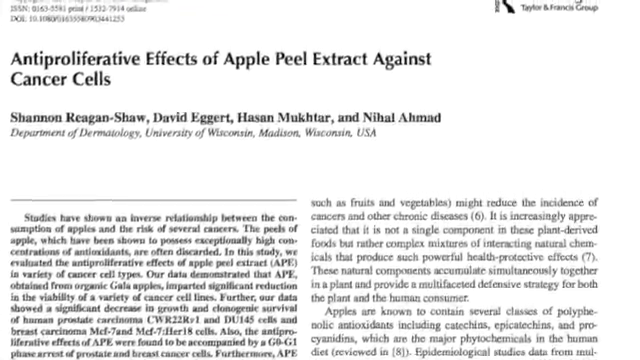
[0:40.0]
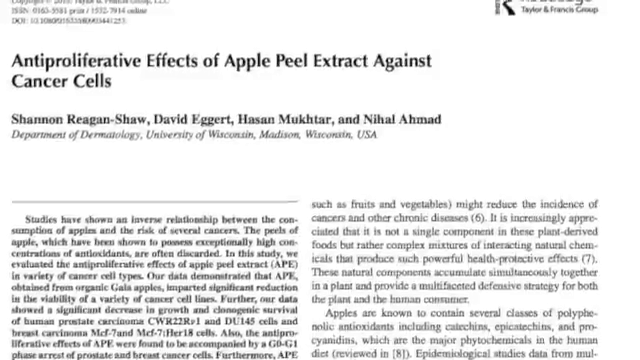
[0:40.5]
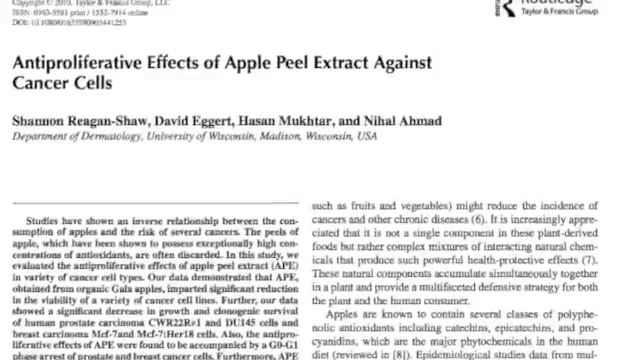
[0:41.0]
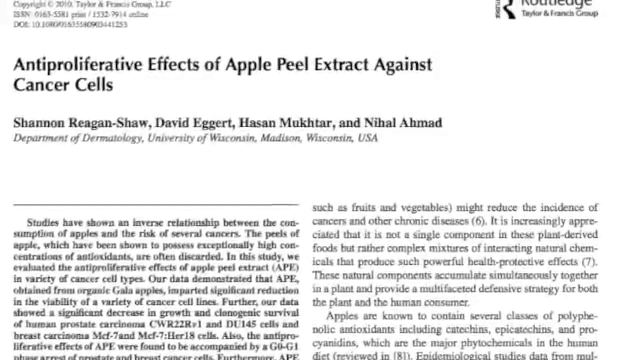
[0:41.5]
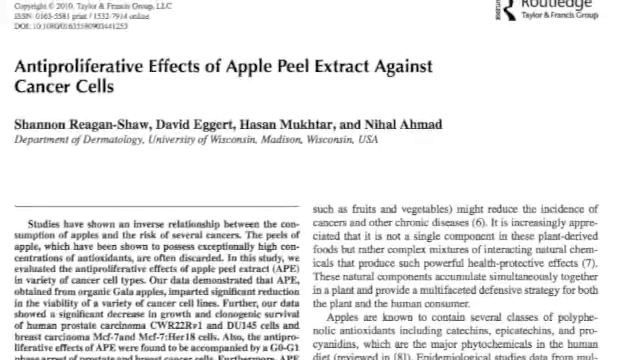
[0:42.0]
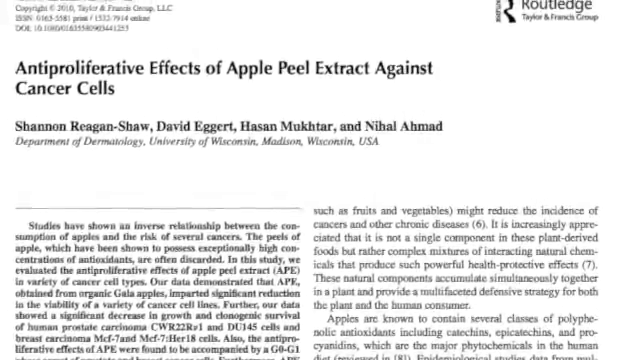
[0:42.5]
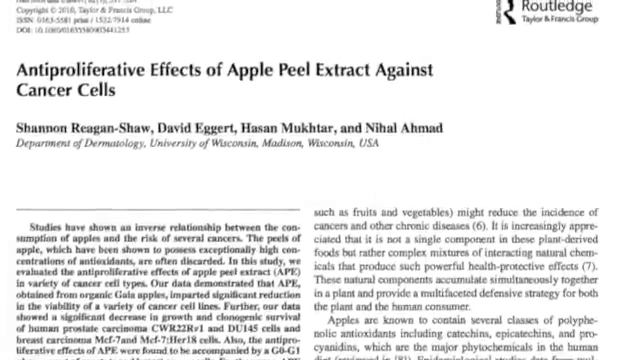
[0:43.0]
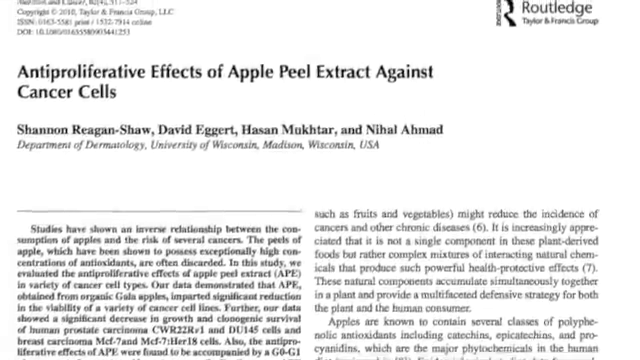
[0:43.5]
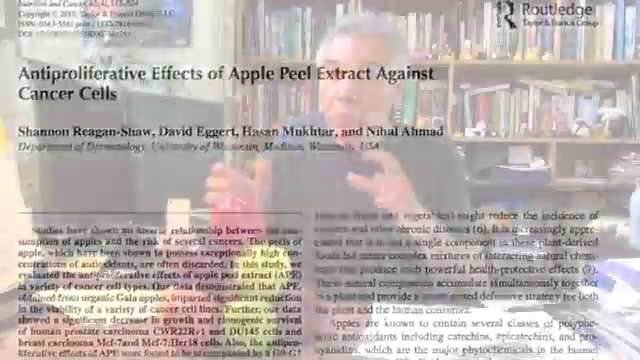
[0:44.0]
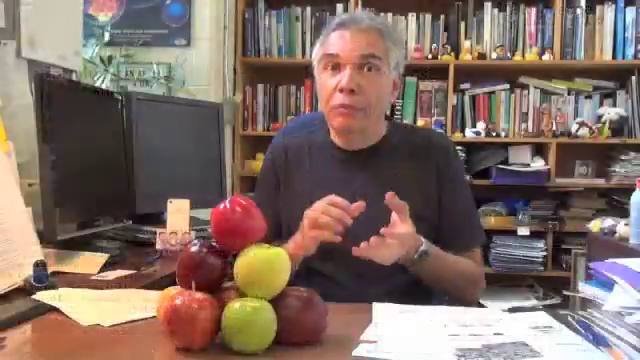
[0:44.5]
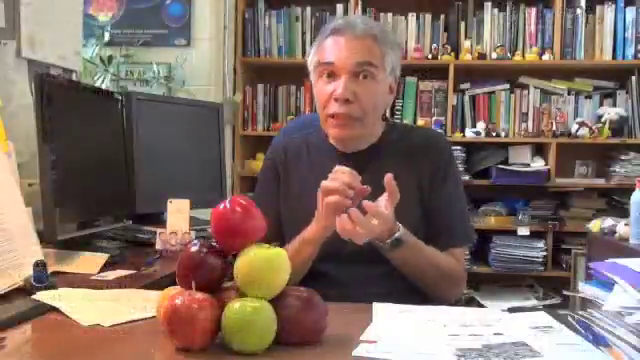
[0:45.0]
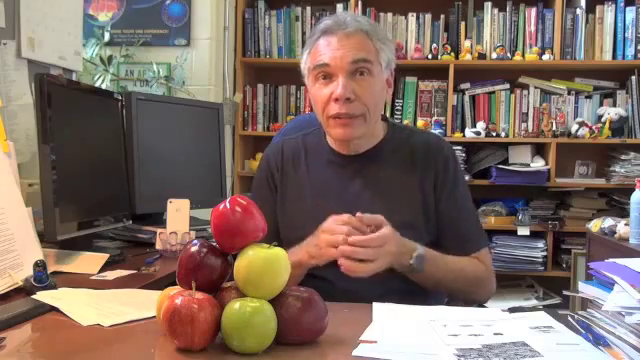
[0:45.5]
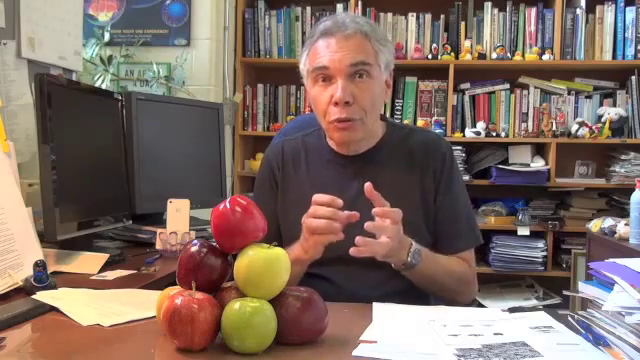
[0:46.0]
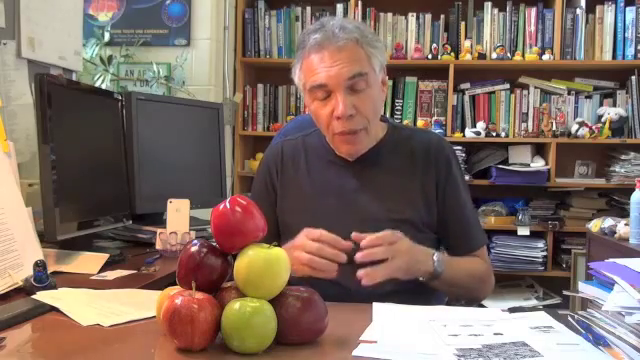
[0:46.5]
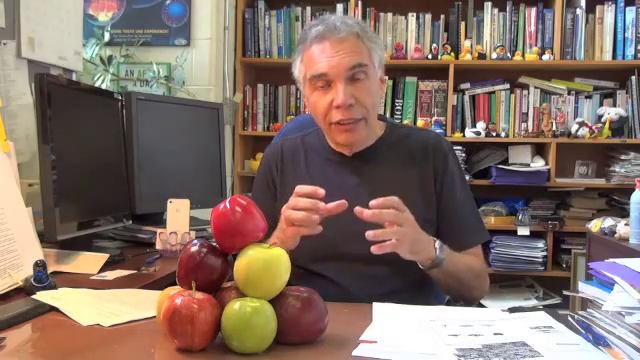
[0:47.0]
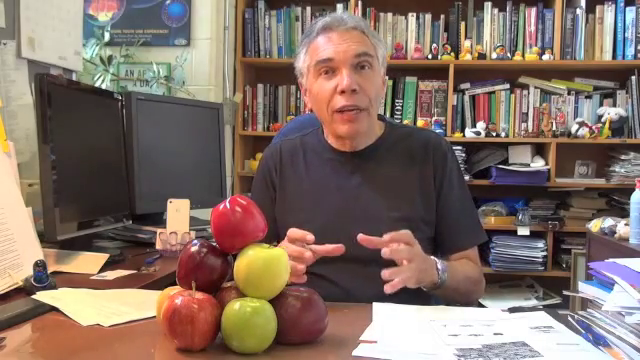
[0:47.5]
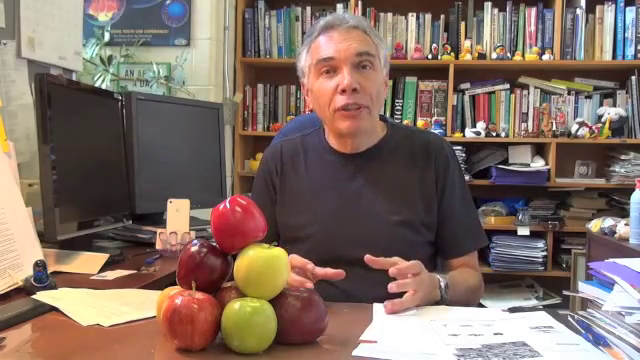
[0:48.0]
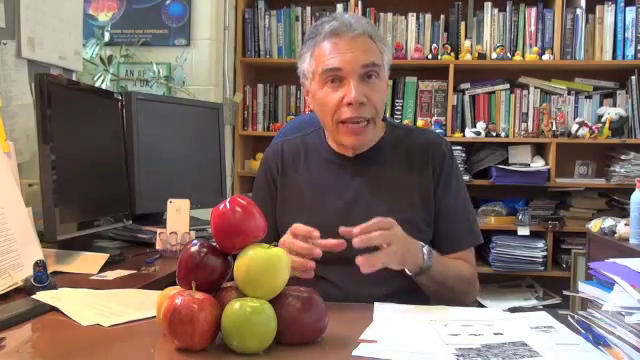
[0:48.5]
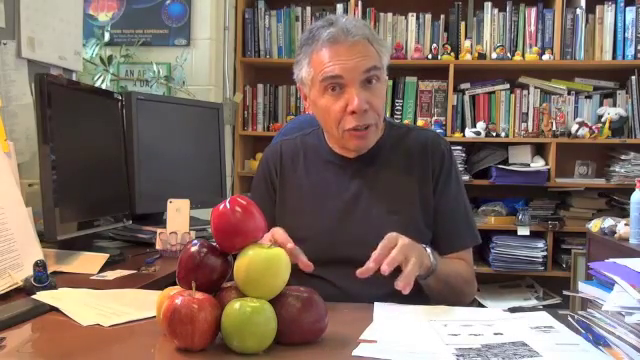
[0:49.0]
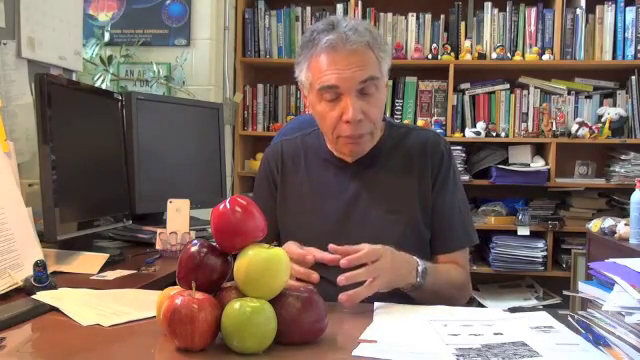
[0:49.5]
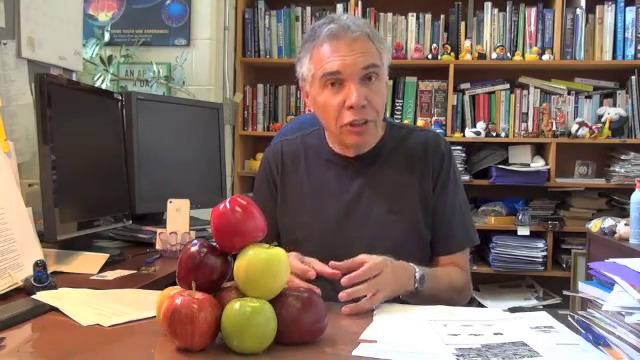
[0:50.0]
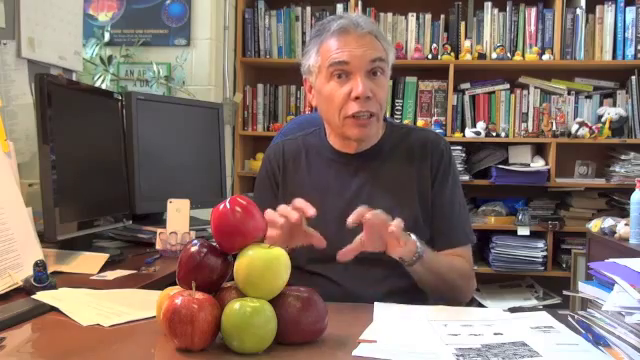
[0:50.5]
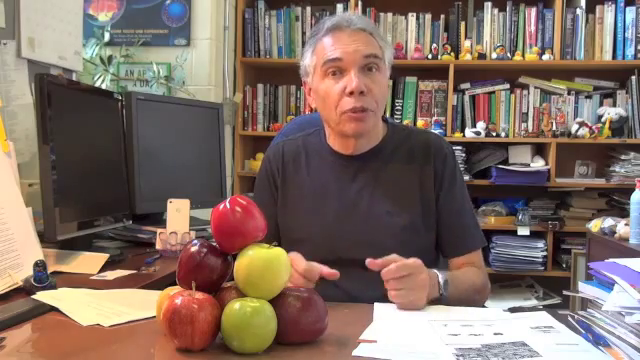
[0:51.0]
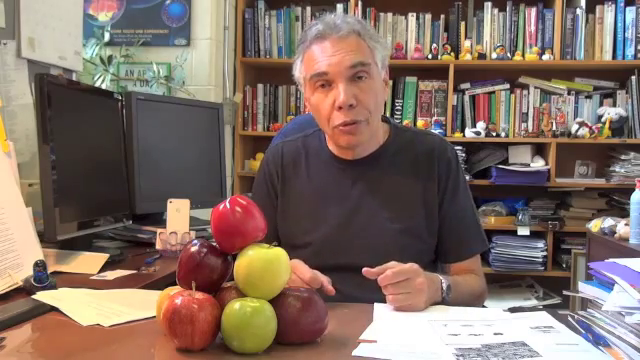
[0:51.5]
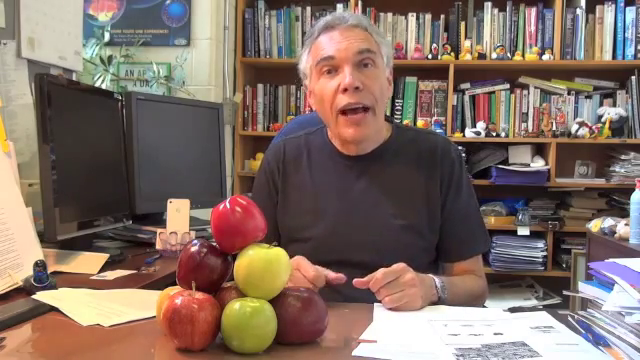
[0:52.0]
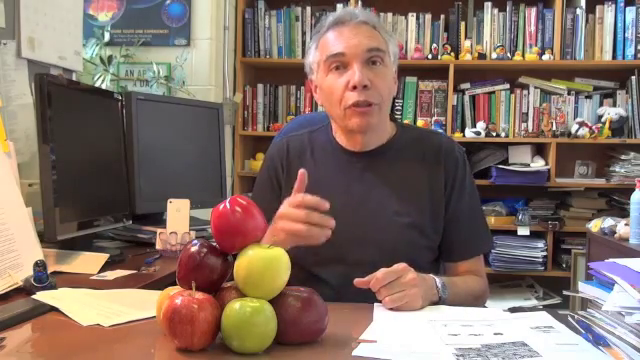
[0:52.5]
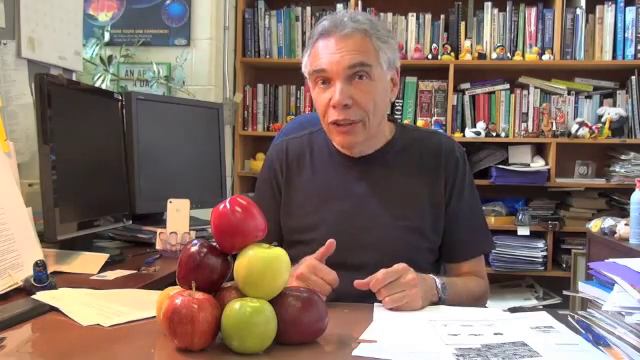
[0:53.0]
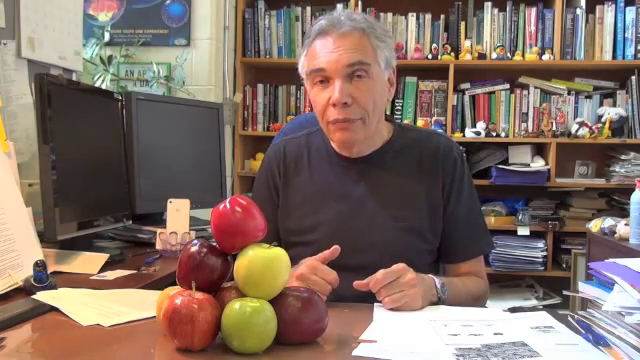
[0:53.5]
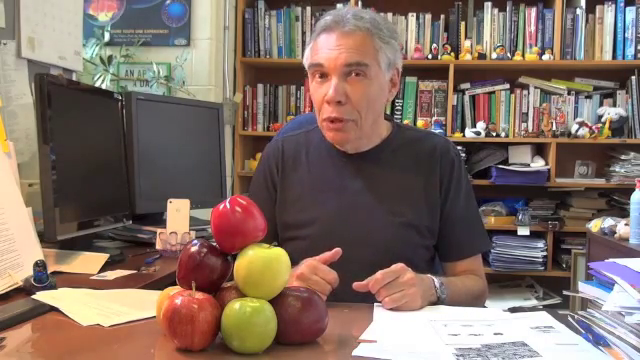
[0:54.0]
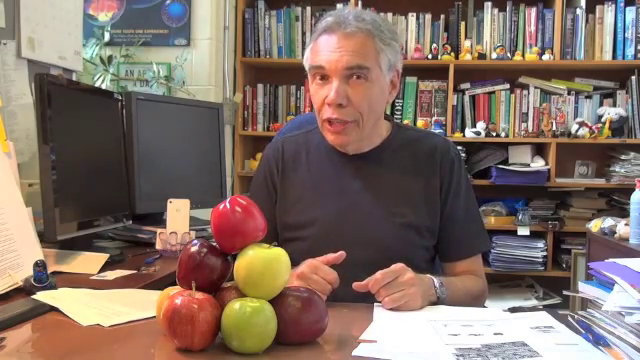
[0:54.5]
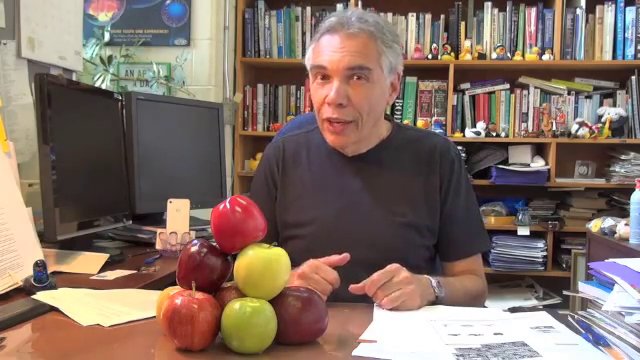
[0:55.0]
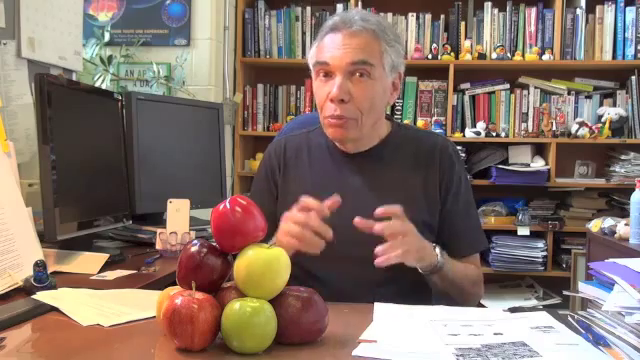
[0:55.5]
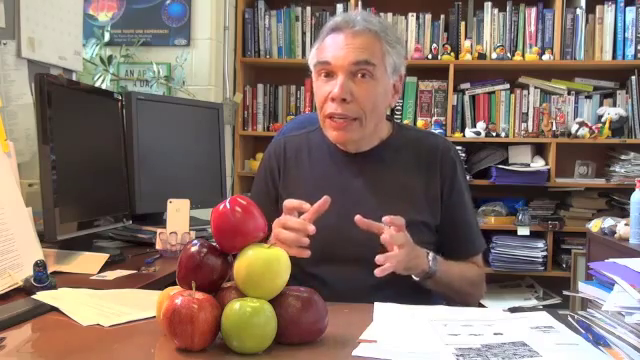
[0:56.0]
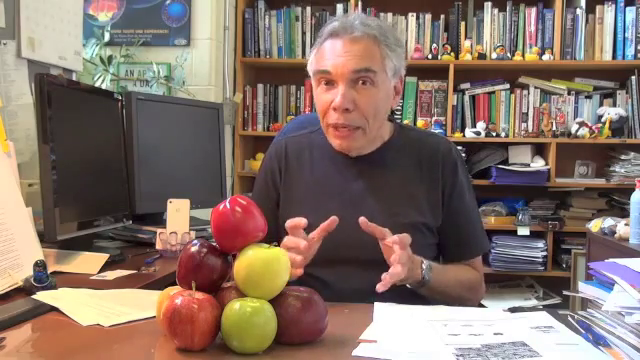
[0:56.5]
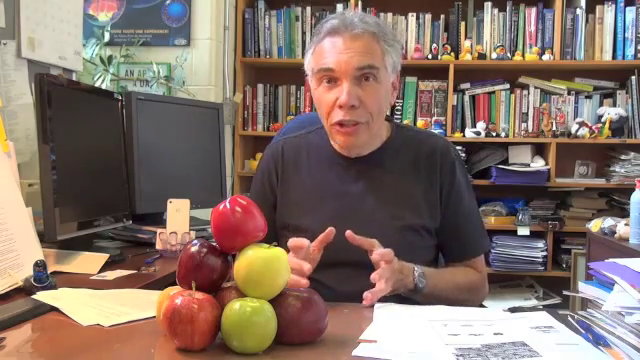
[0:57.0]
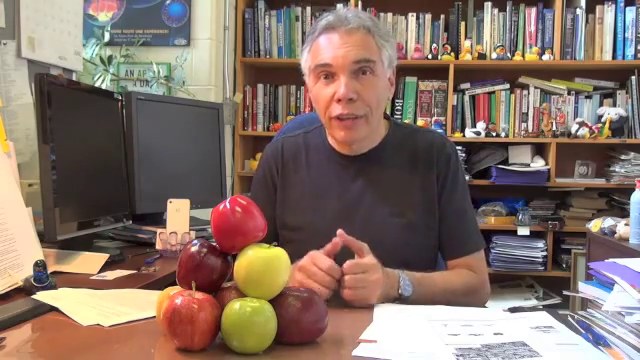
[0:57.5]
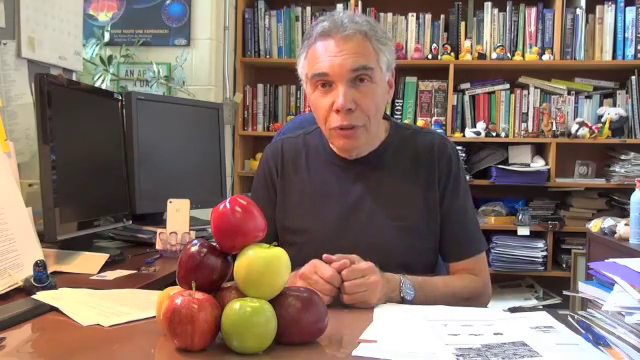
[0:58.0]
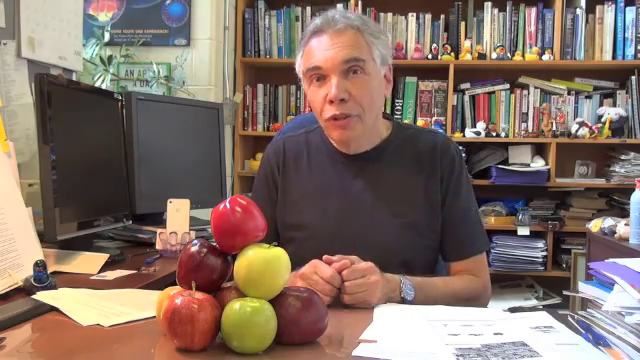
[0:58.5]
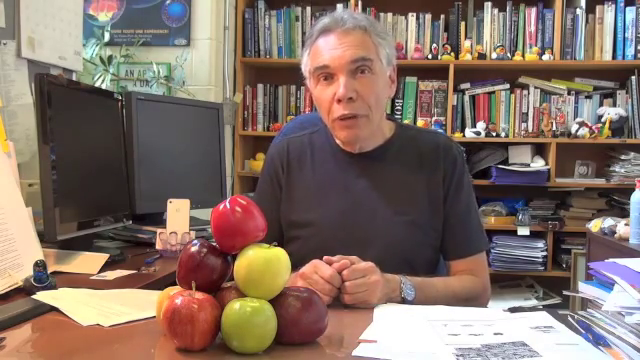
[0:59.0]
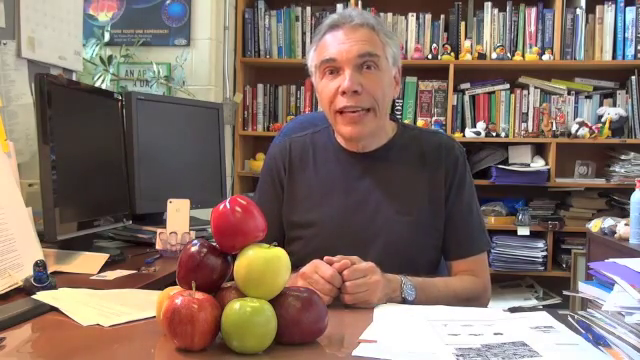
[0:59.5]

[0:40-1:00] A research paper titled "Antiproliferative effects of apple peel extract against cancer cells" is shown. It lists four authors, Shannon Regenshaw, David Eggert, Hassan Mukhtar and Nihal Ahmed, from the "Department of Dermatology, University of Wisconsin-Madison, Wisconsin, USA". Below is finer print that starts the paper itself, probably the abstract. The image then transitions to a middle-aged man with gray hair in a black t-shirt, sitting at a desk and speaking directly to the camera. Two computer monitors are to his side, and behind him is a very full bookshelf. On the desk in front of him are papers and a stack of red, green and yellow apples. He motions with his hands the whole time he speaks and seems to be demonstrating something, at one point looking like he is separating things and then maybe combining them.